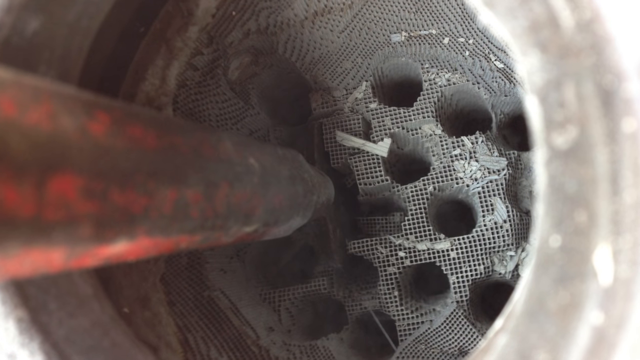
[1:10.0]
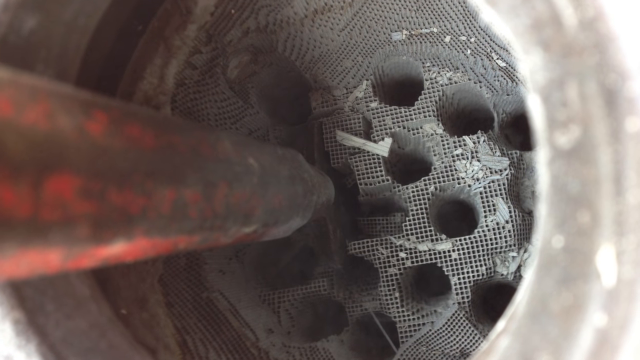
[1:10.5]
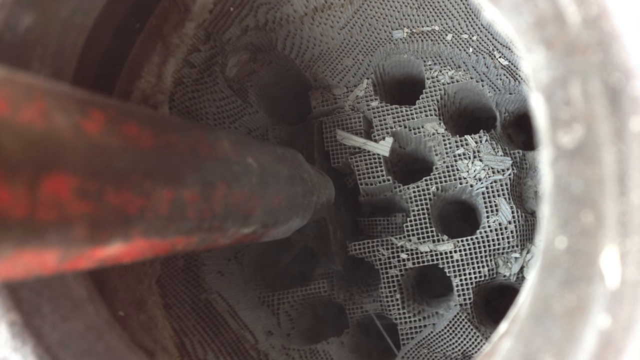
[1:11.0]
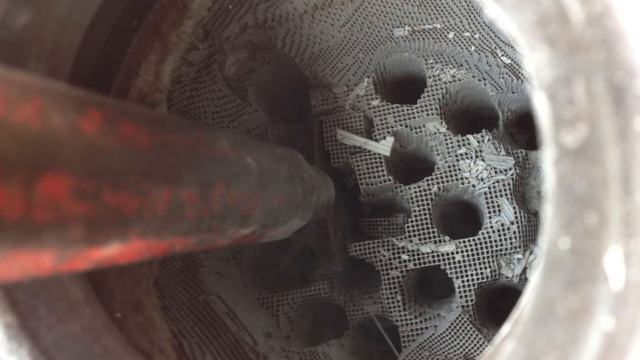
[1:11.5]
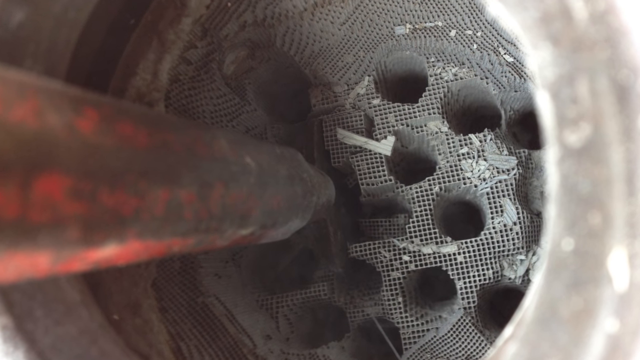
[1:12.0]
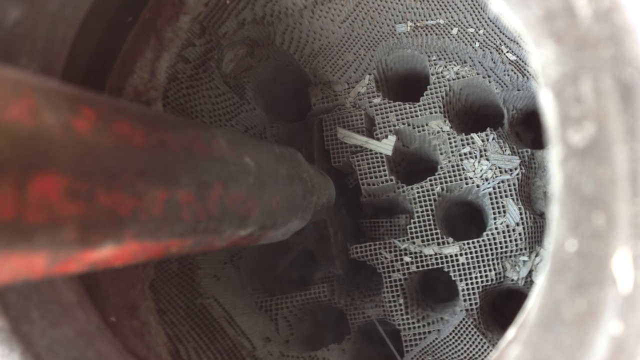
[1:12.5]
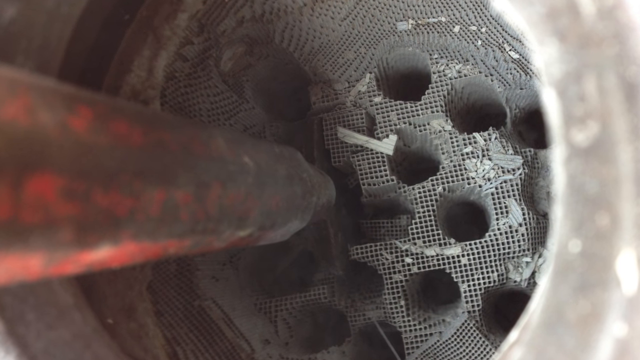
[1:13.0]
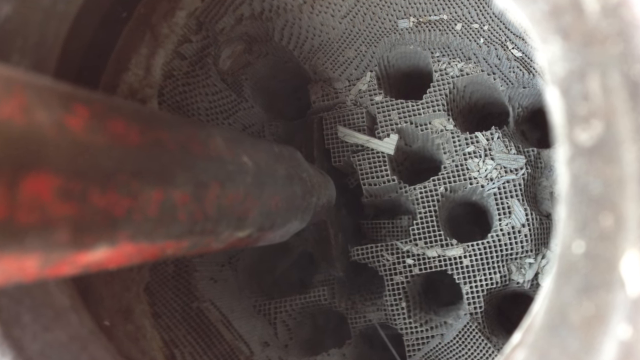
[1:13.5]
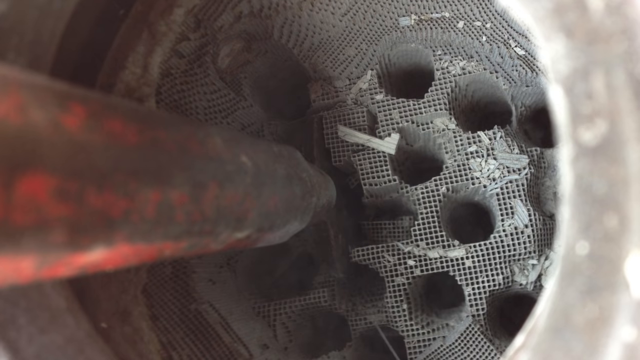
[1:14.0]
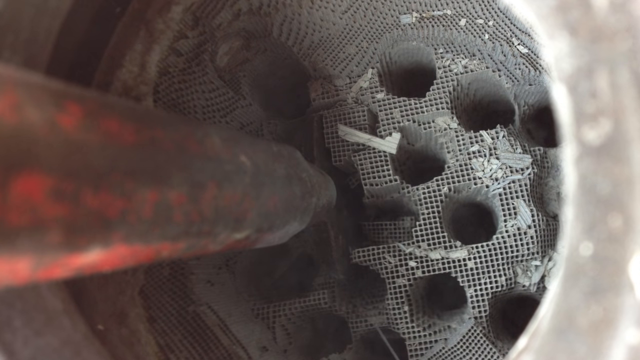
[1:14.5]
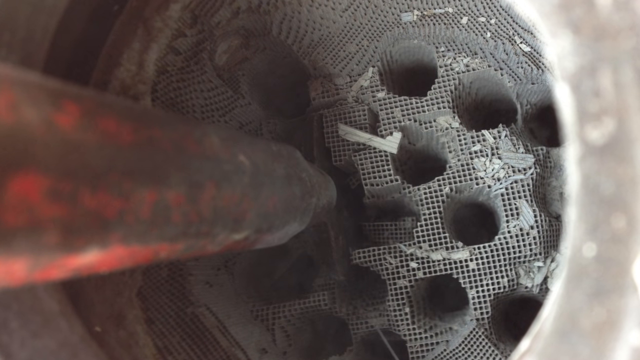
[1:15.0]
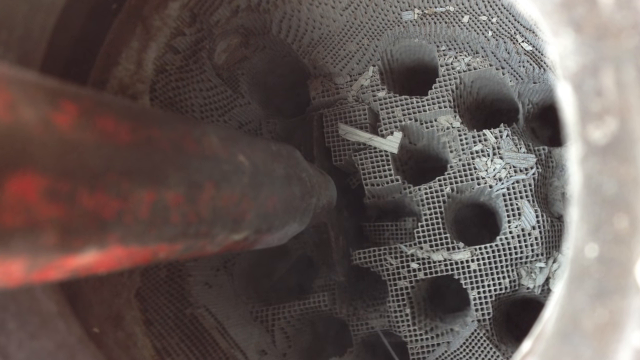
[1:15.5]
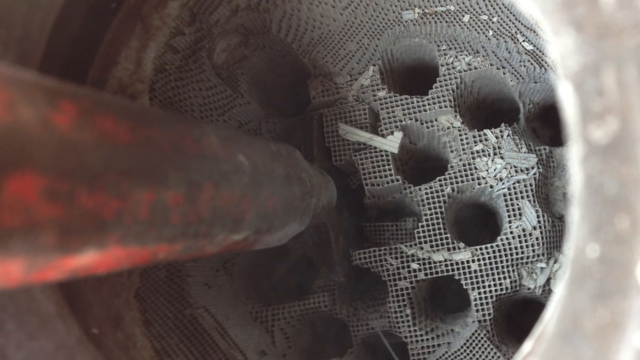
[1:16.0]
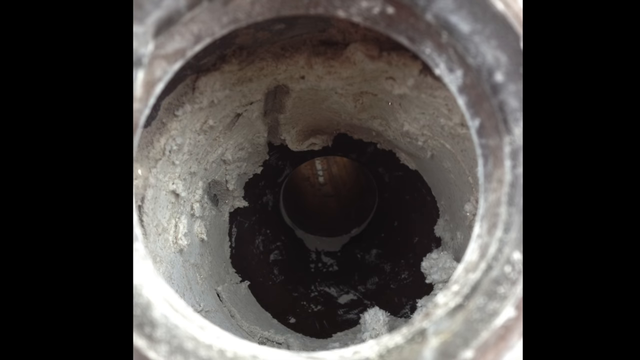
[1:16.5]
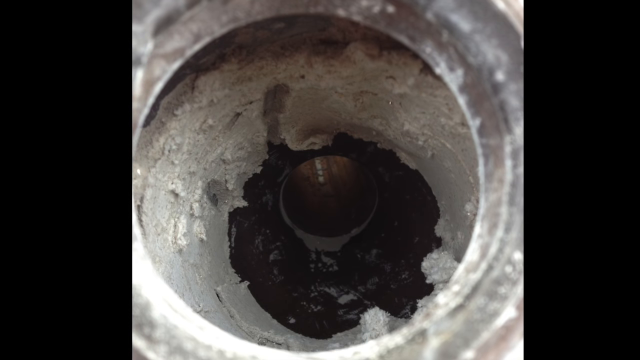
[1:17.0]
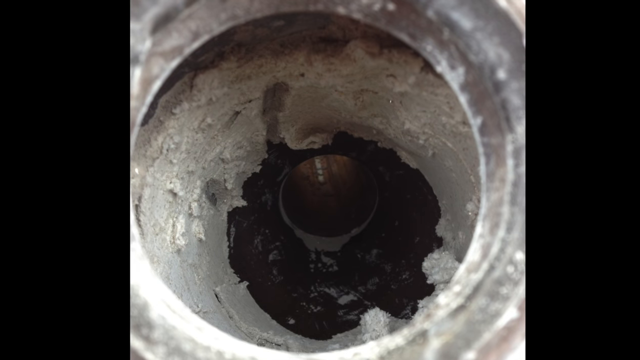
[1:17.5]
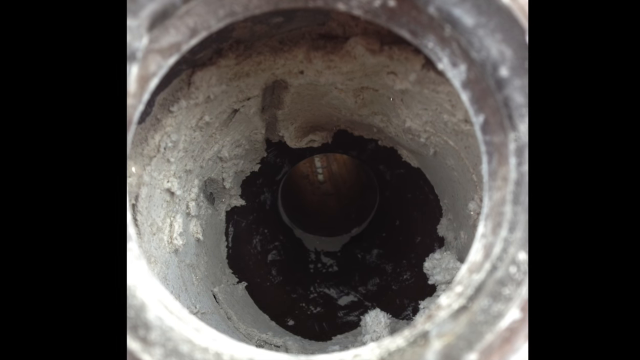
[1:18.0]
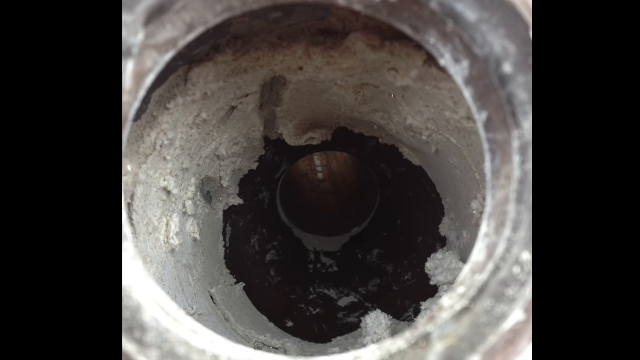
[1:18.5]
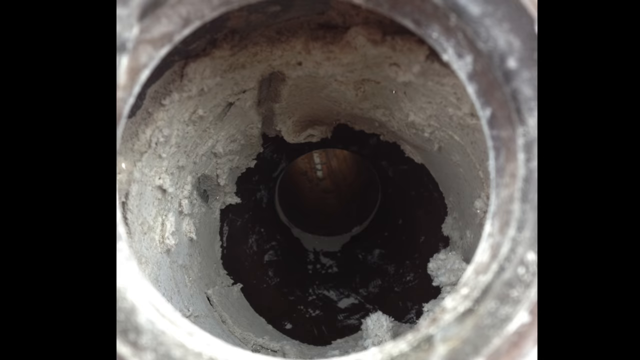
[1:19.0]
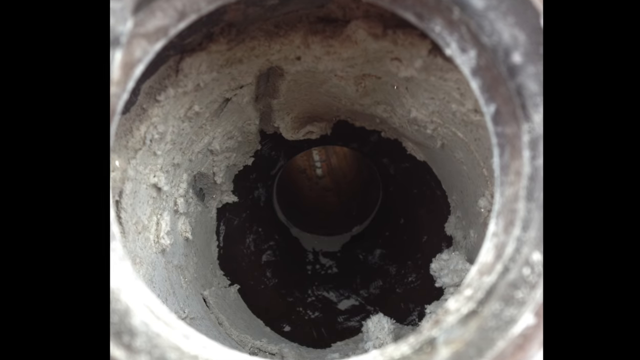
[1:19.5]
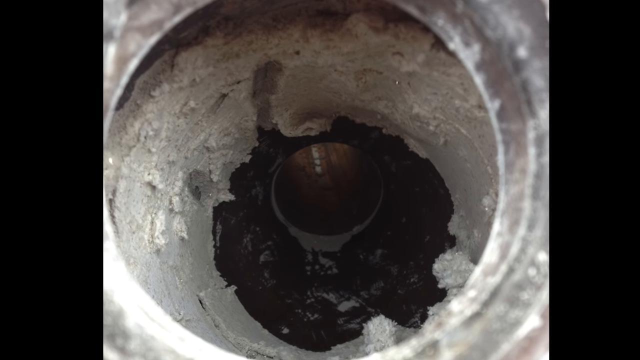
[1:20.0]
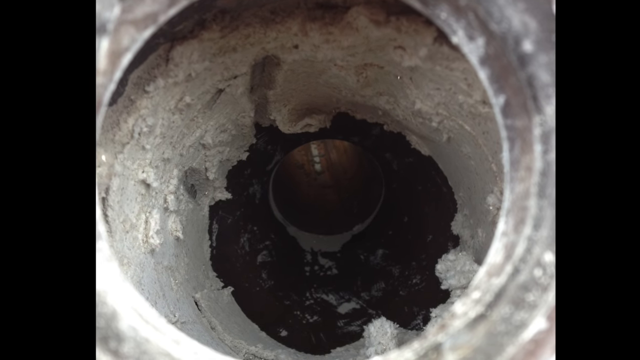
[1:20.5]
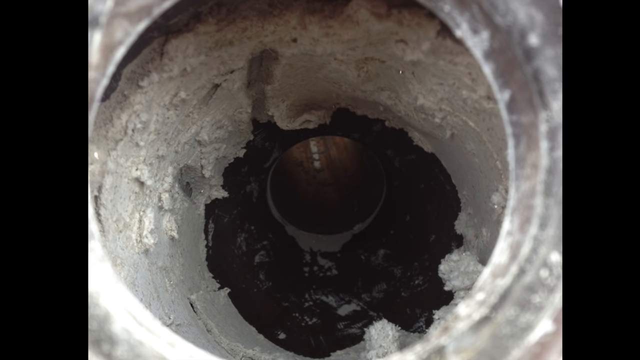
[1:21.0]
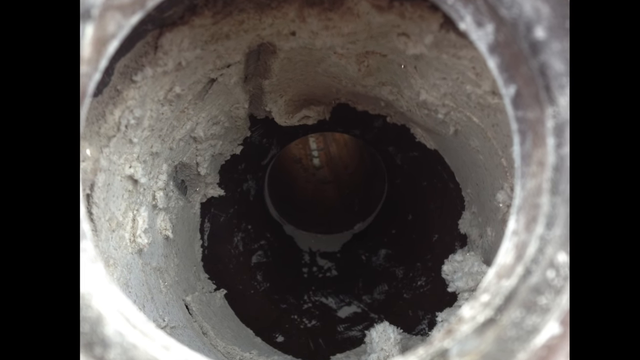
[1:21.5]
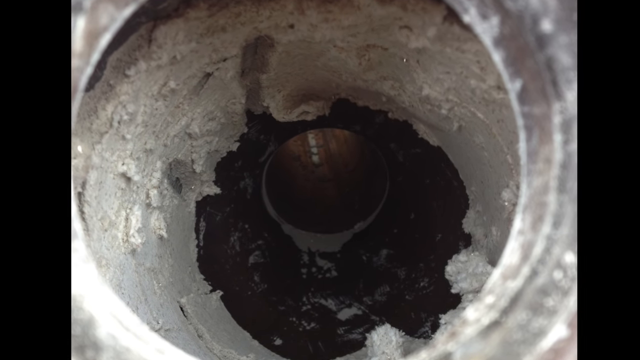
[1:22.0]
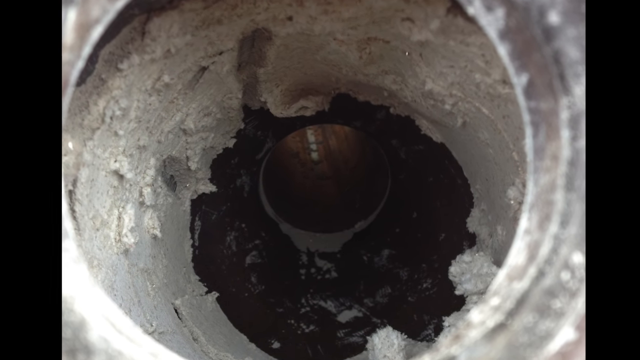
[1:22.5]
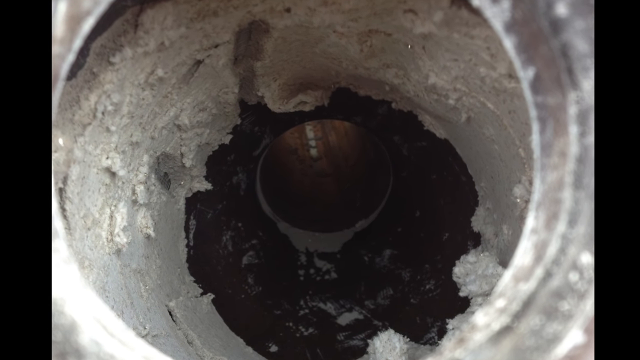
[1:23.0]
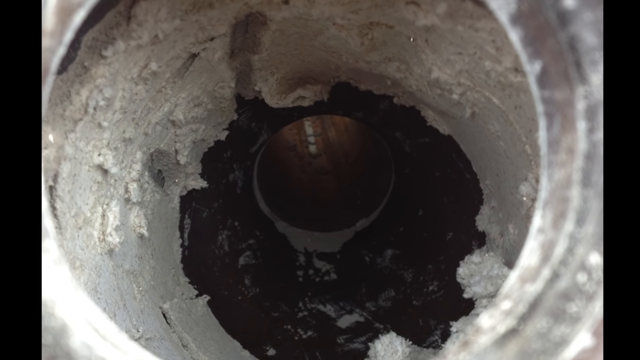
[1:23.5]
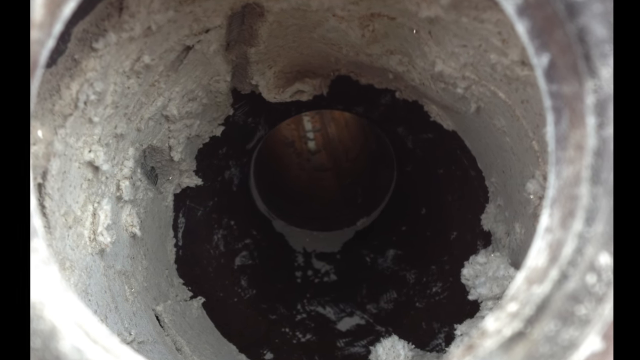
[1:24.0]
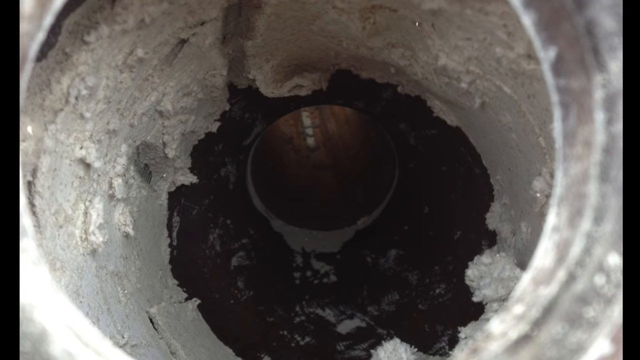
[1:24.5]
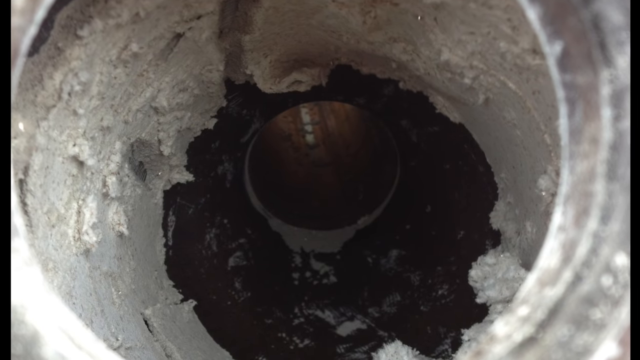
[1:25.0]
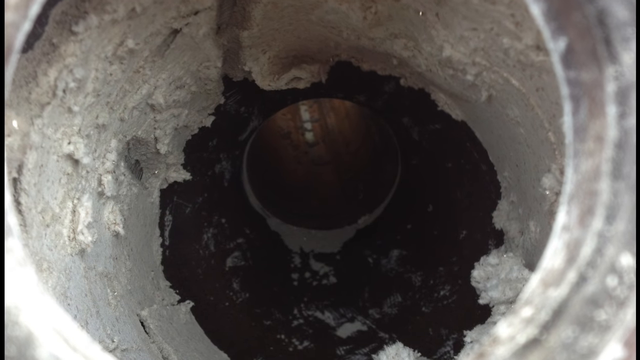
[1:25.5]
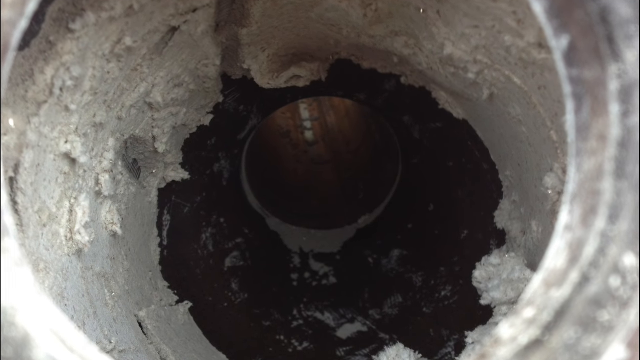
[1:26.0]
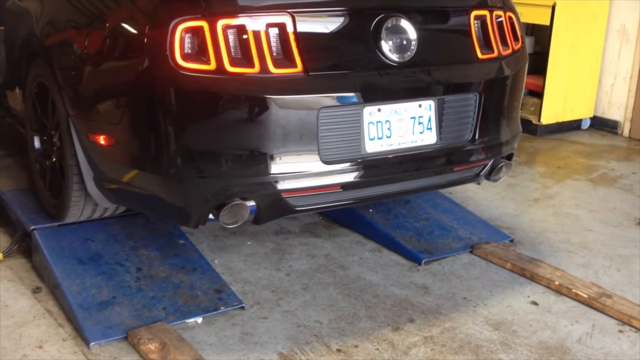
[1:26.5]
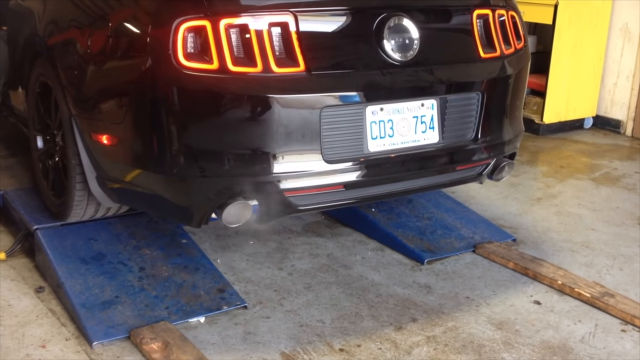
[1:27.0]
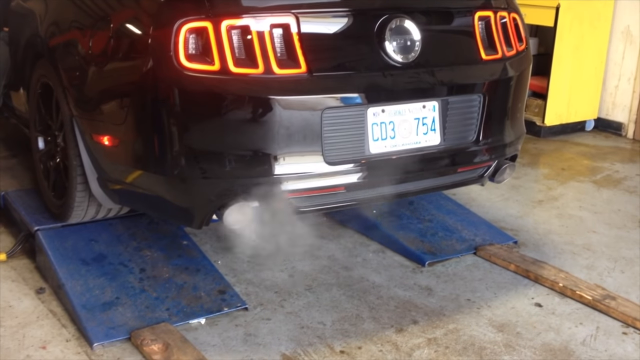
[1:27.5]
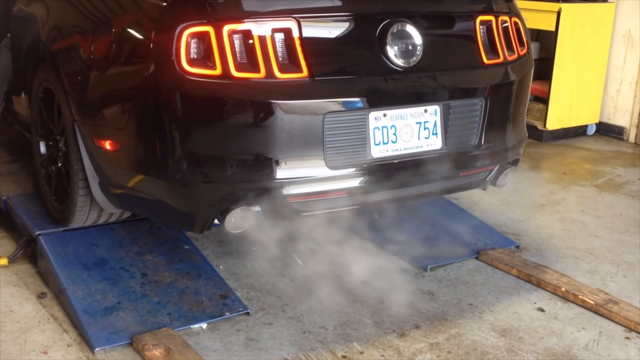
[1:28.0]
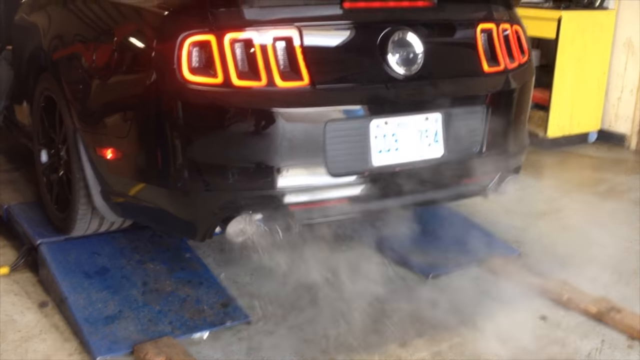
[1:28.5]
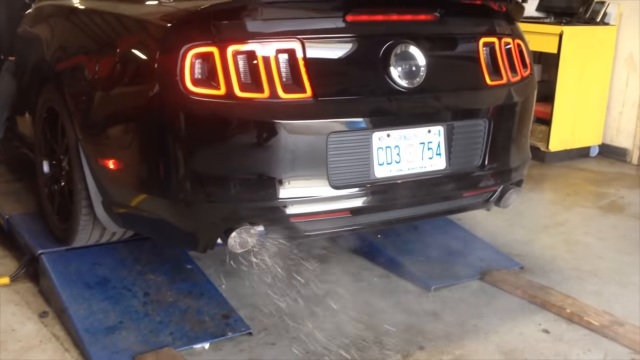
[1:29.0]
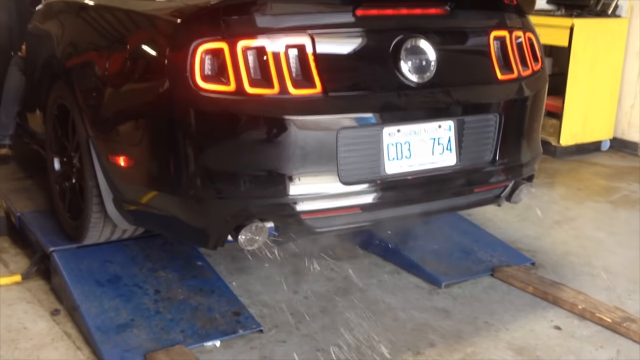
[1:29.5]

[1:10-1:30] The inside of a cylinder has holes in it and almost looks like cardboard with squares in it, while an instrument drills through the cardboard, making small holes. The inside of a very jagged cylinder is also shown. Then the back of a sports car appears, possibly a Mustang, though it is hard to tell because it is seen only for a split second. It starts its engine, and exhaust blows out of the exhaust pipe on the left-hand side. It is a newer model with three lights on each side, outlined in orange. The car is on blue lifts in a shop in a garage and looks like it is about to back down off them.